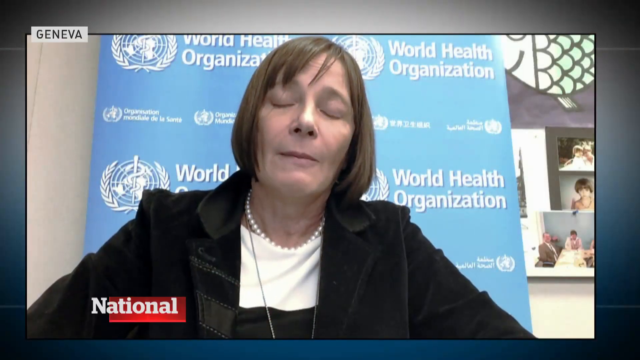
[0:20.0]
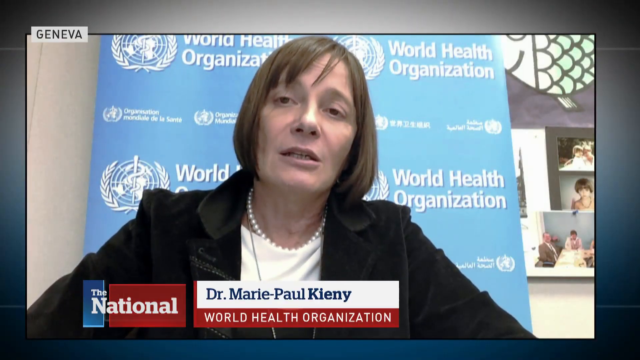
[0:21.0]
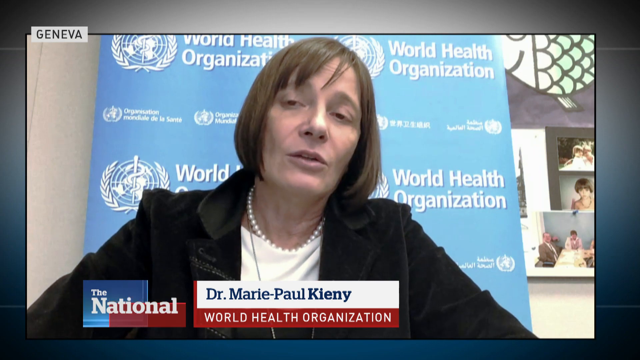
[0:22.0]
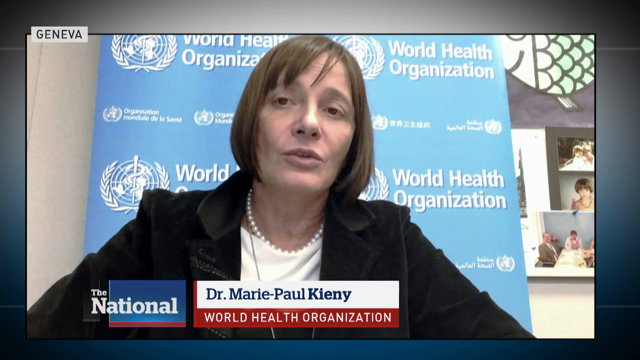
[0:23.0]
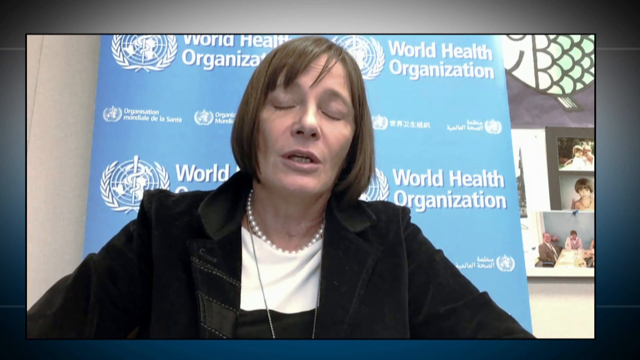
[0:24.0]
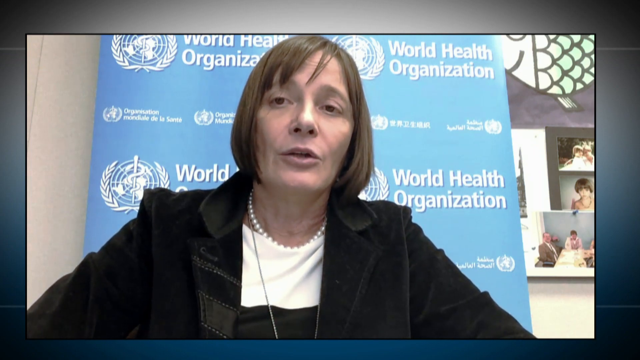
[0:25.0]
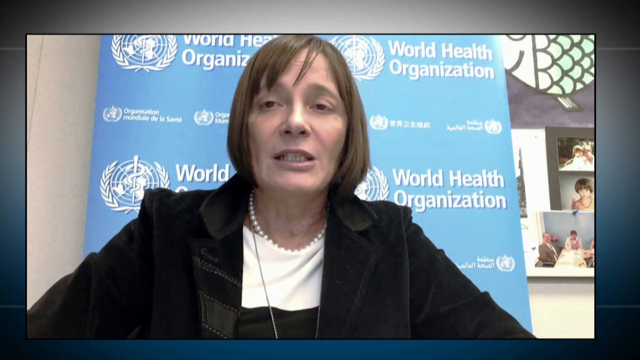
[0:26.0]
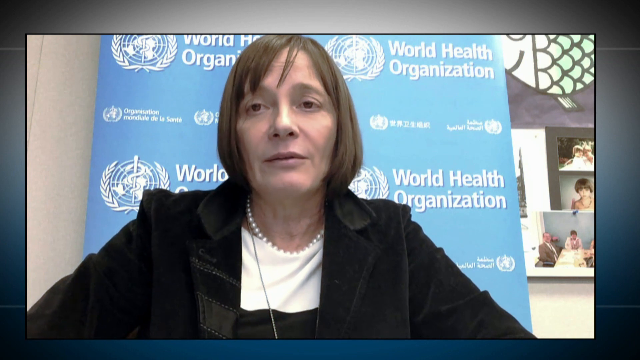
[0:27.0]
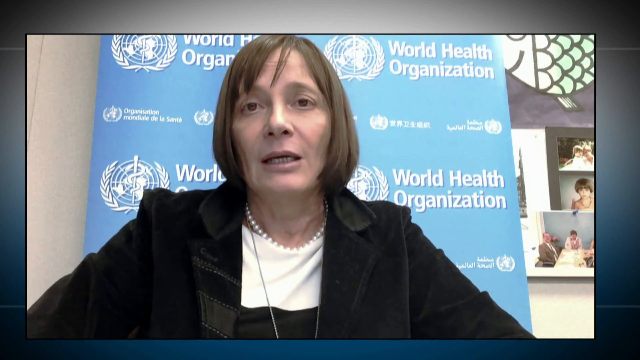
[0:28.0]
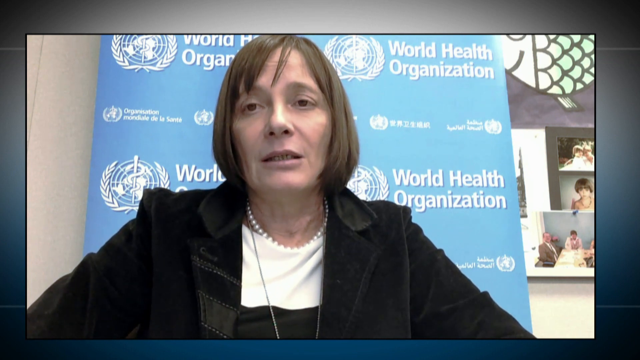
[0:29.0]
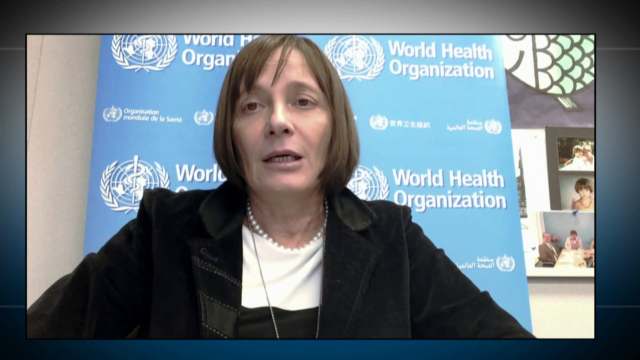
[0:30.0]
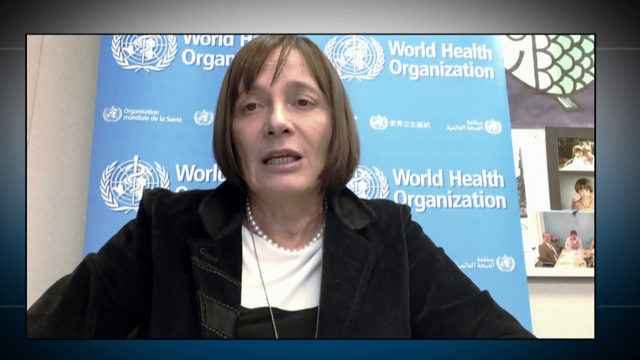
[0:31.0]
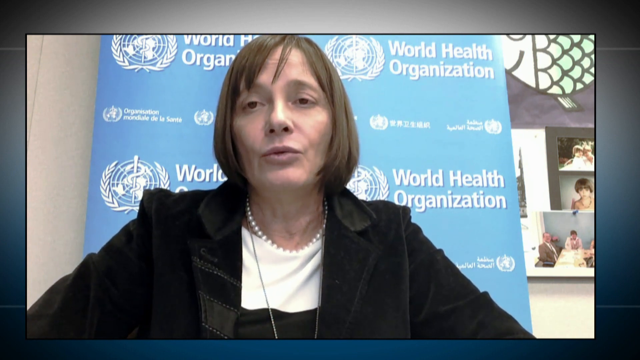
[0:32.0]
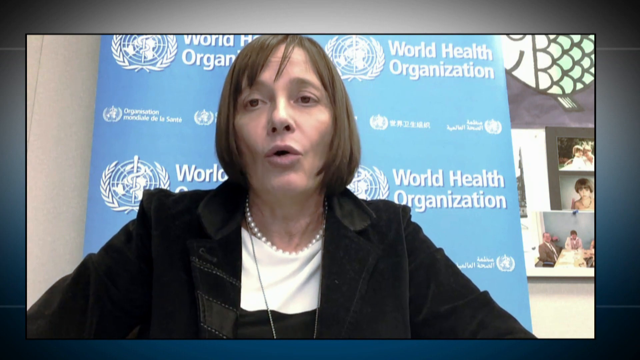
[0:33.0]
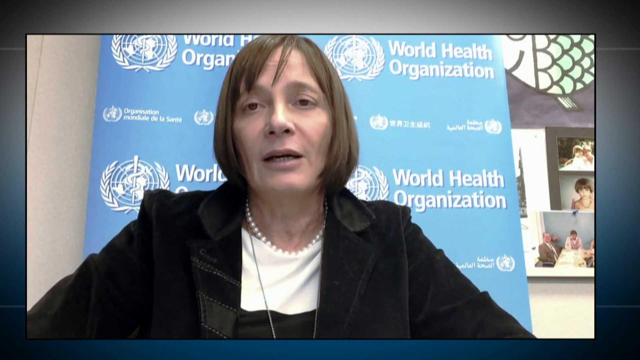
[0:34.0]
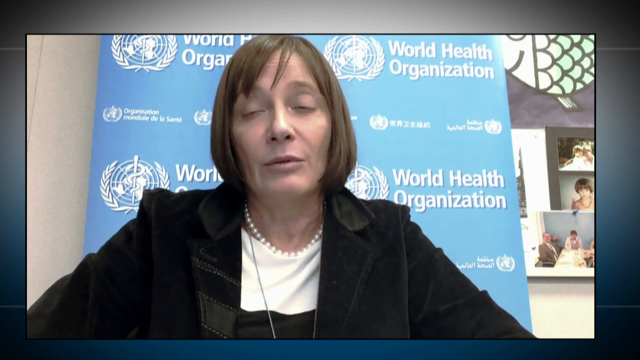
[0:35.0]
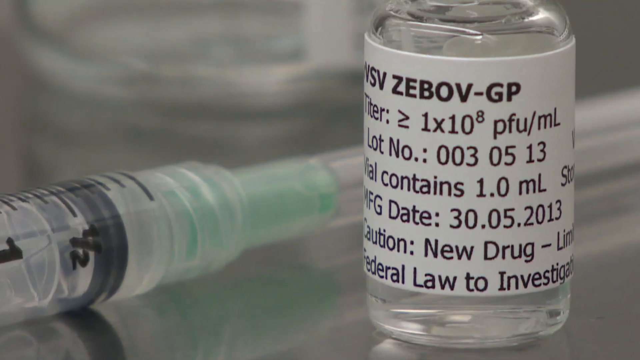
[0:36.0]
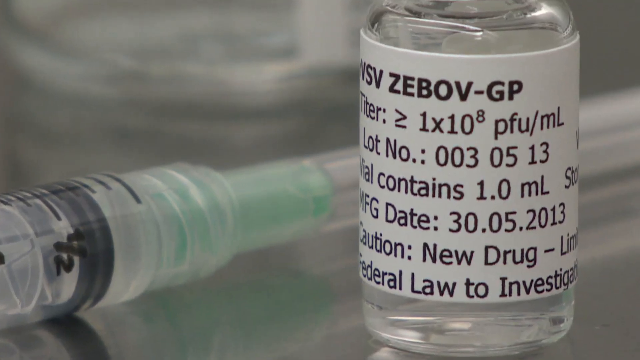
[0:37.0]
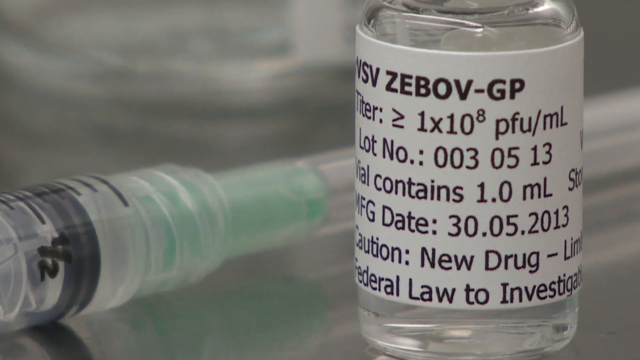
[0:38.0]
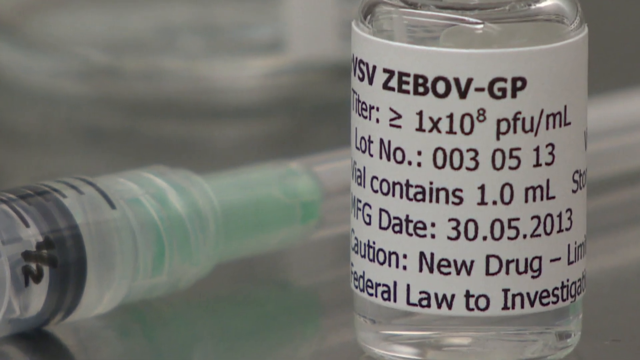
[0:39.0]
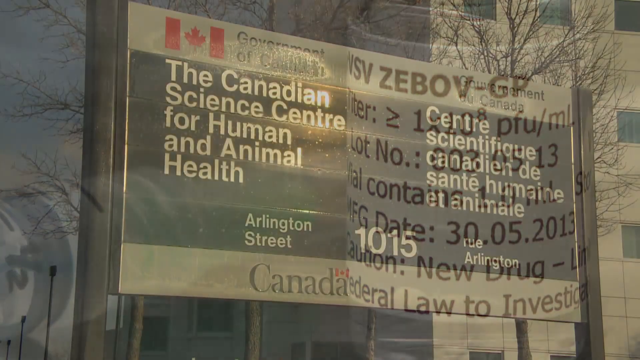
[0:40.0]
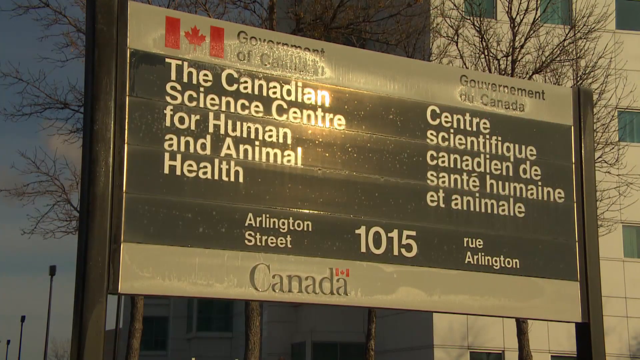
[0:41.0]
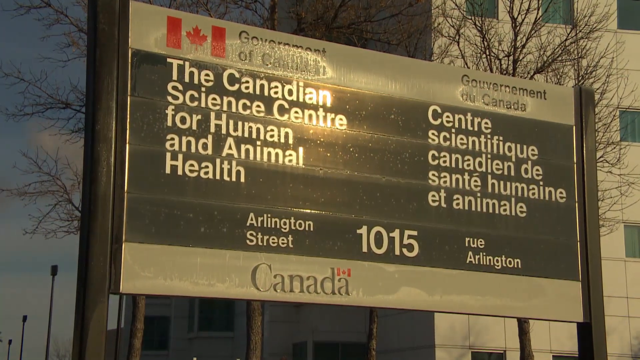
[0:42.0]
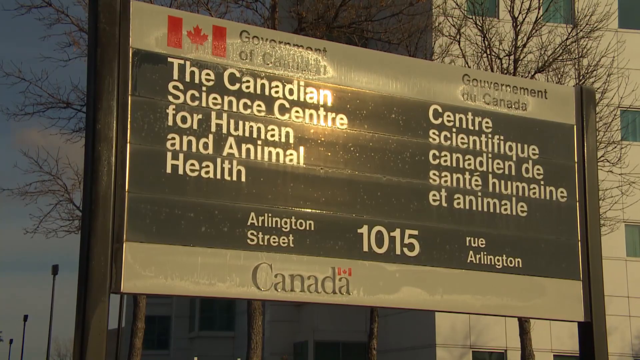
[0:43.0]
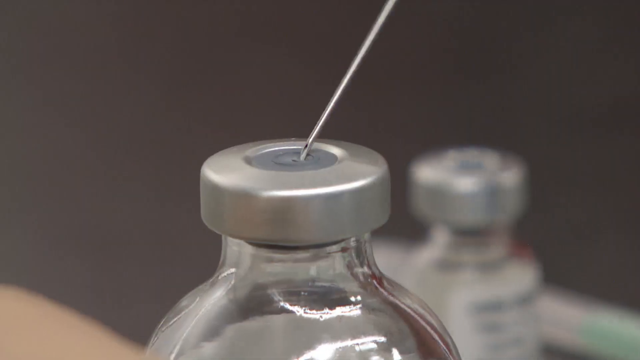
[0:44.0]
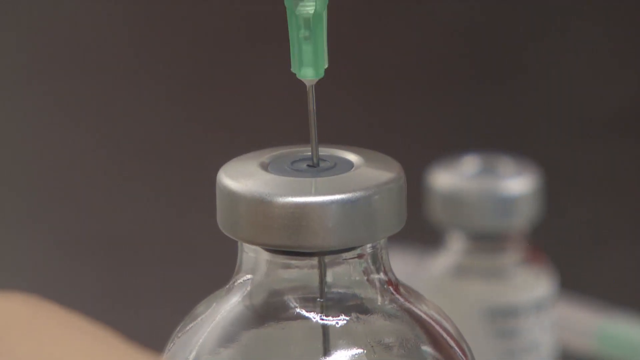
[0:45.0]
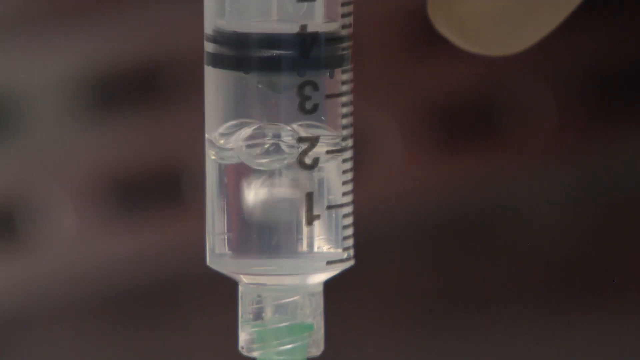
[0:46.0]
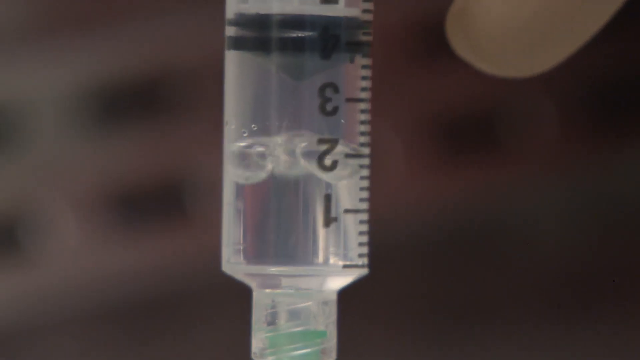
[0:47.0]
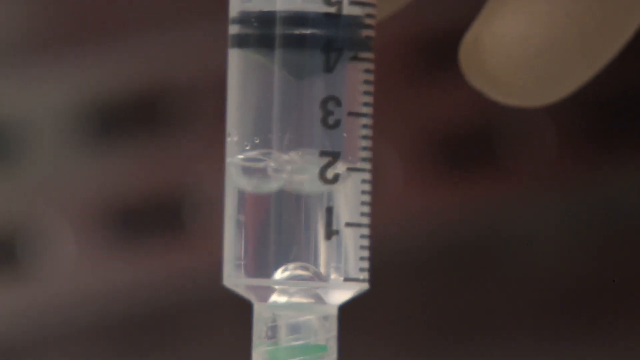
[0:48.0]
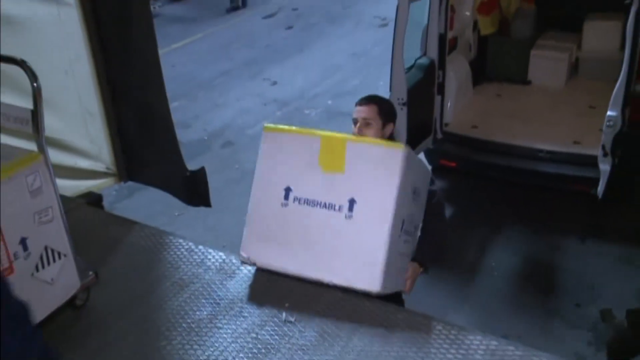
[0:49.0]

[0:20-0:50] A woman with cropped hair and a black jacket talks into the camera in front of a blue board that says "World Health Organization." Labels below her read "The National," with the woman's name and her title as a doctor beside it, and "World Health Organization" below that. In the upper left corner, a white label says "Geneva." As she talks, the labels disappear. The video then shows what looks to be some sort of vial of medicine with what possibly looks like a shot beside it; it has a white label, and the video appears to go over some of its information. Next comes a board with "Government of Canada" at the top and a Canadian flag, and below that it says "the Canadian science center for human and animal health." Someone then pulls some kind of liquid out of a vial.